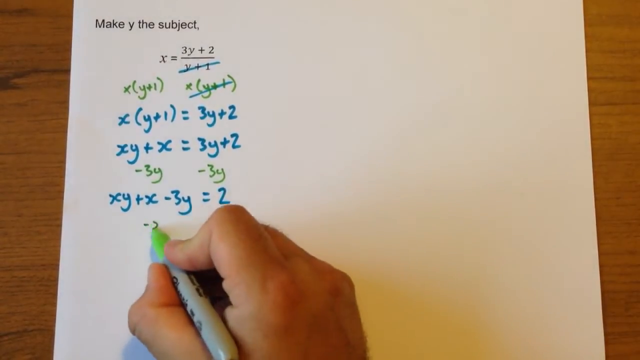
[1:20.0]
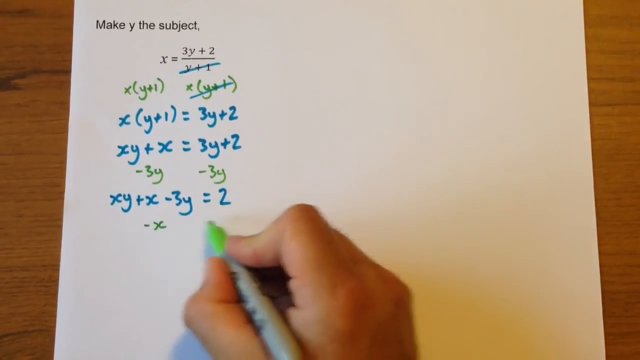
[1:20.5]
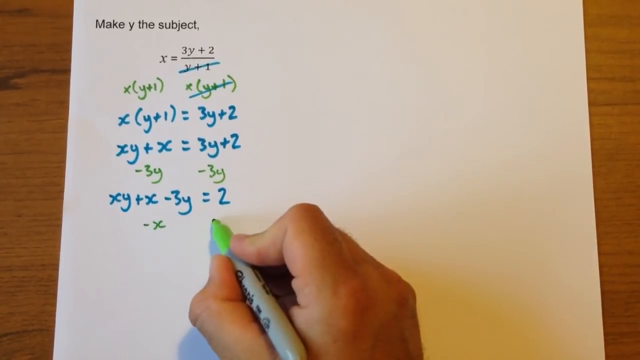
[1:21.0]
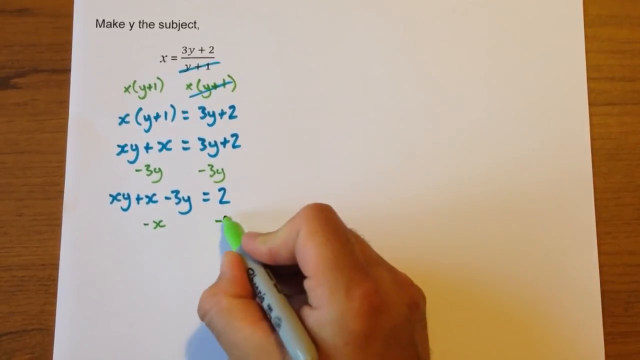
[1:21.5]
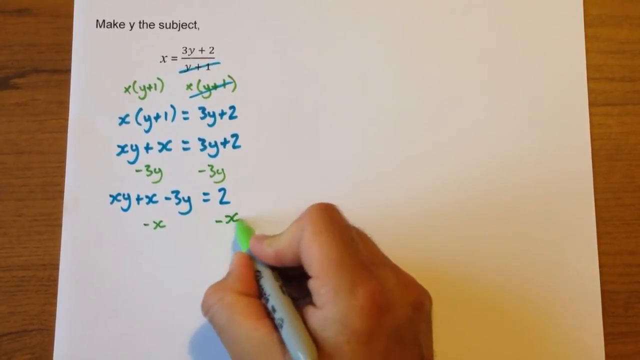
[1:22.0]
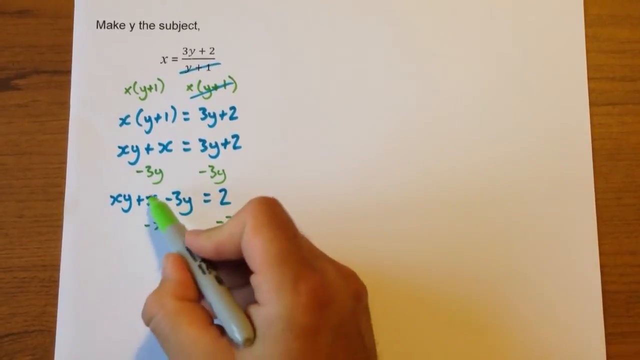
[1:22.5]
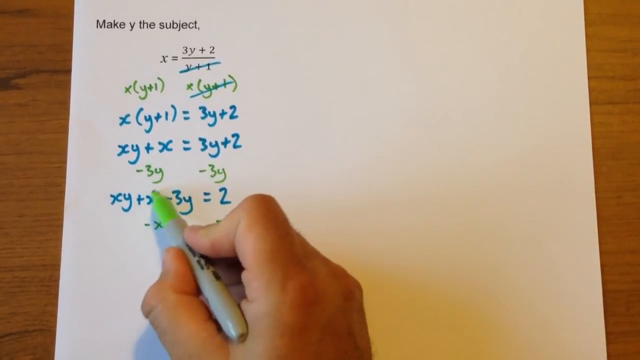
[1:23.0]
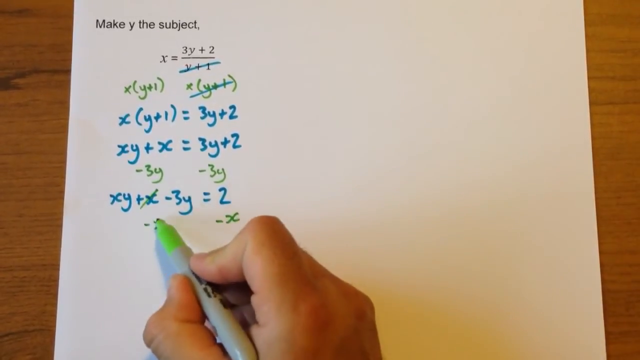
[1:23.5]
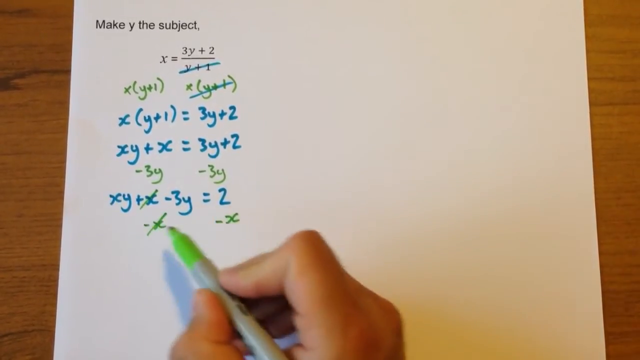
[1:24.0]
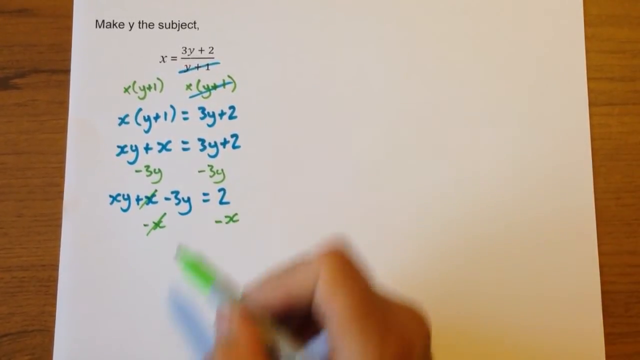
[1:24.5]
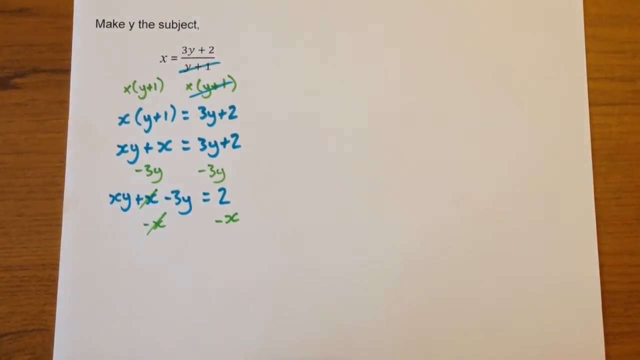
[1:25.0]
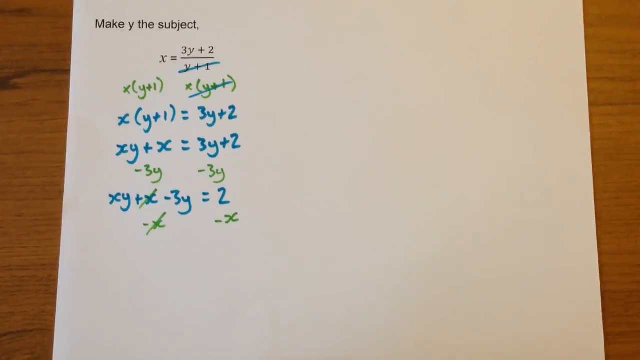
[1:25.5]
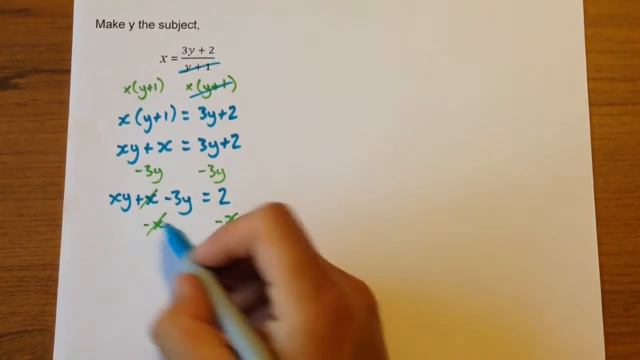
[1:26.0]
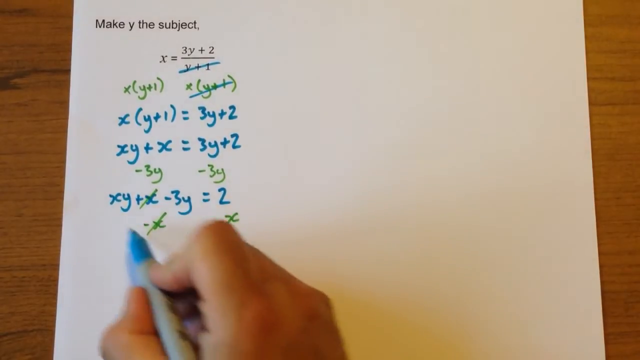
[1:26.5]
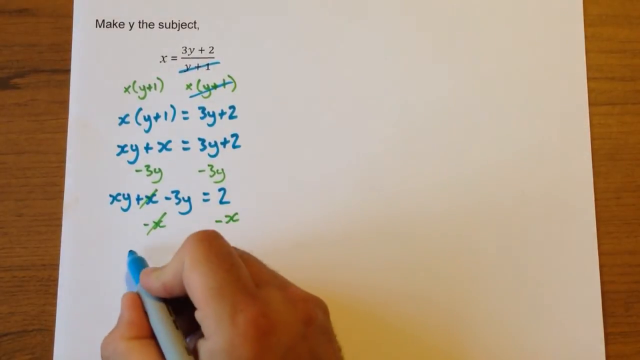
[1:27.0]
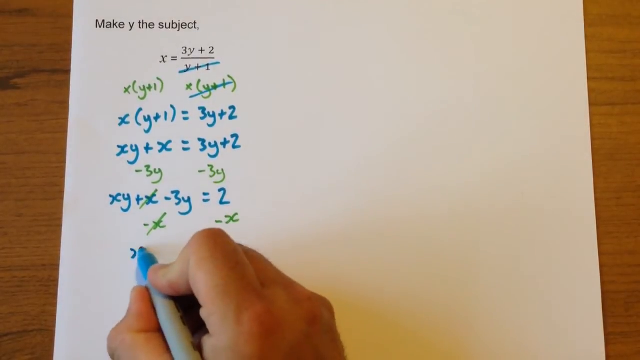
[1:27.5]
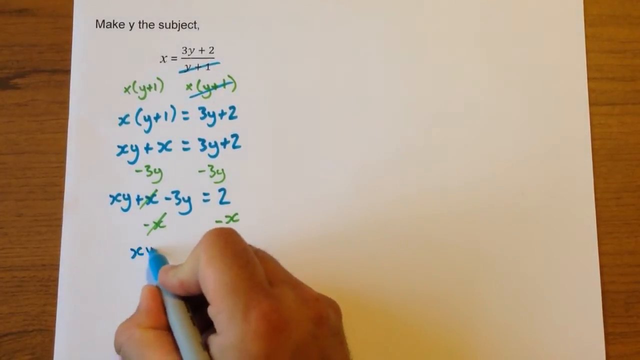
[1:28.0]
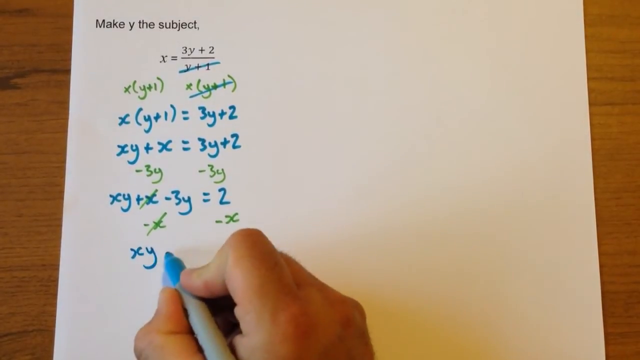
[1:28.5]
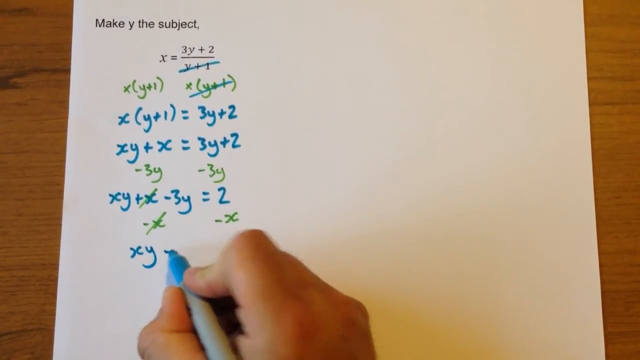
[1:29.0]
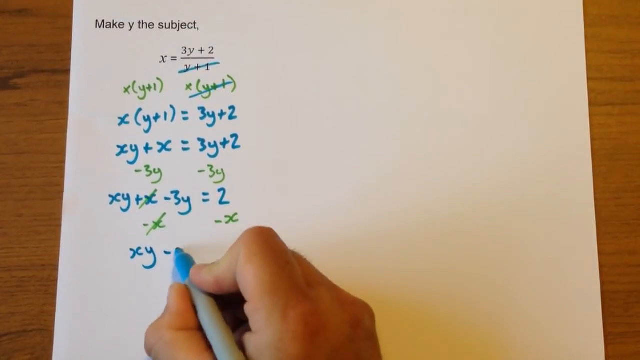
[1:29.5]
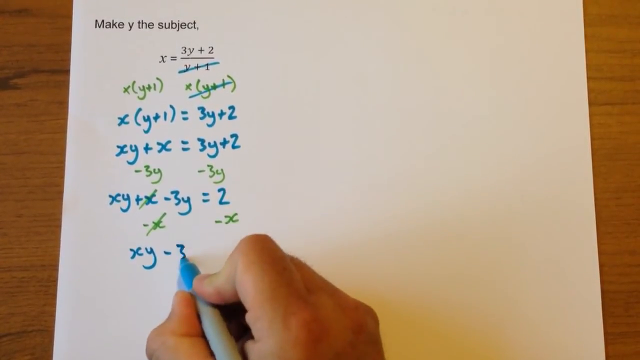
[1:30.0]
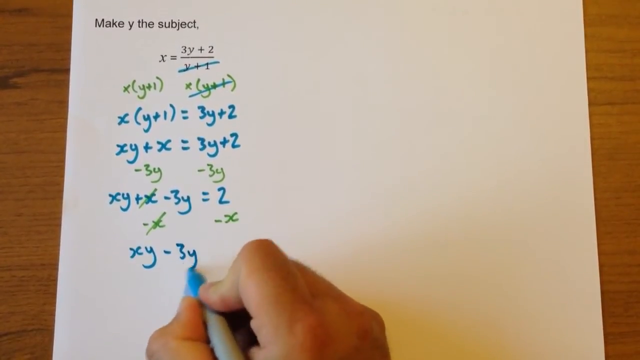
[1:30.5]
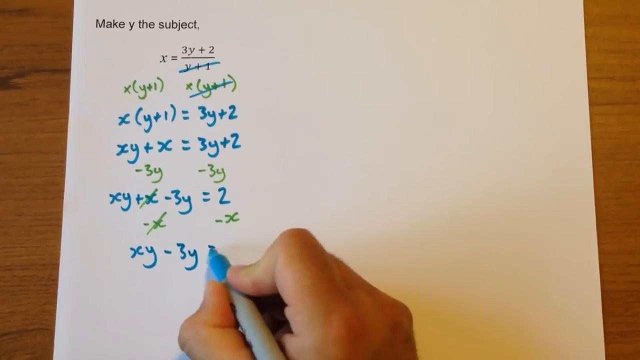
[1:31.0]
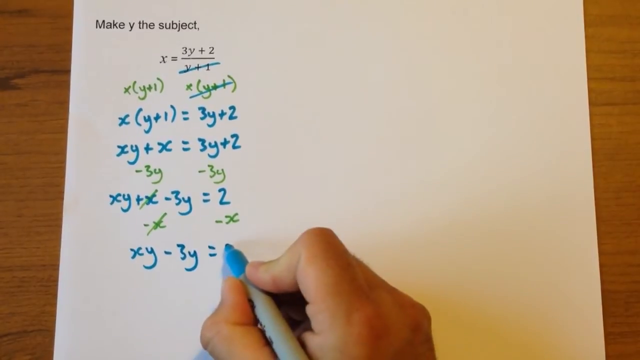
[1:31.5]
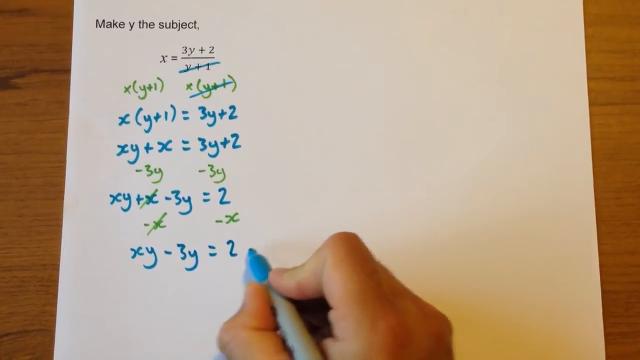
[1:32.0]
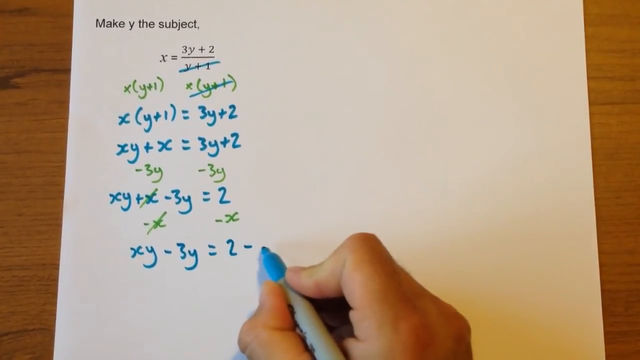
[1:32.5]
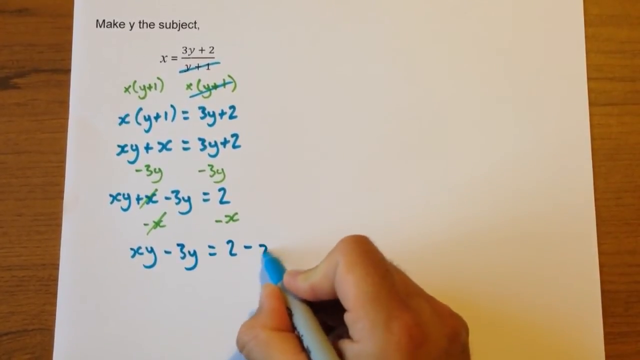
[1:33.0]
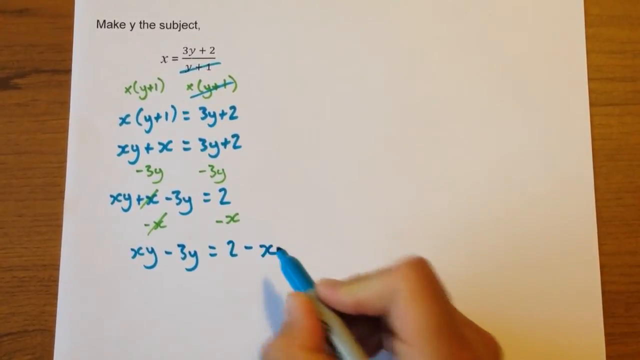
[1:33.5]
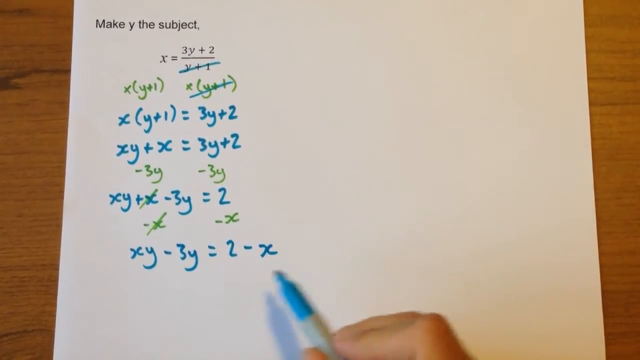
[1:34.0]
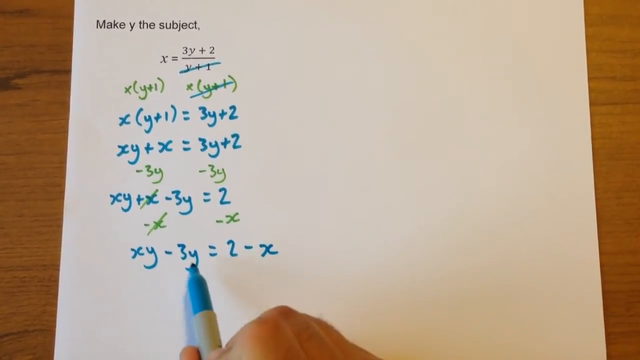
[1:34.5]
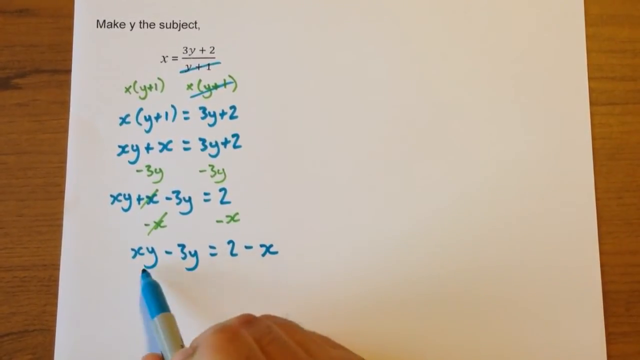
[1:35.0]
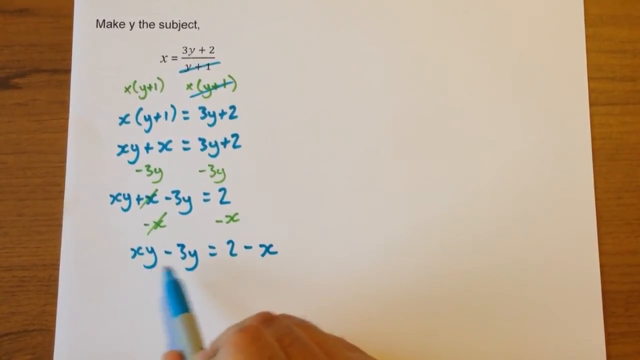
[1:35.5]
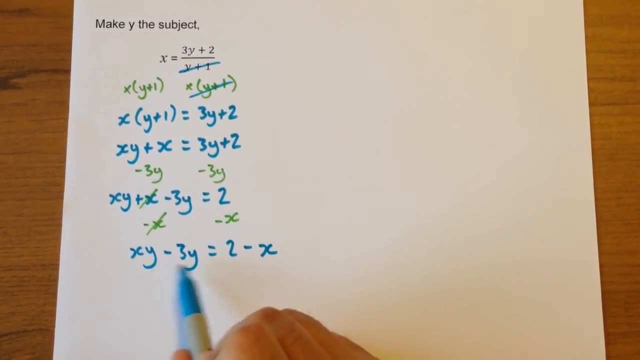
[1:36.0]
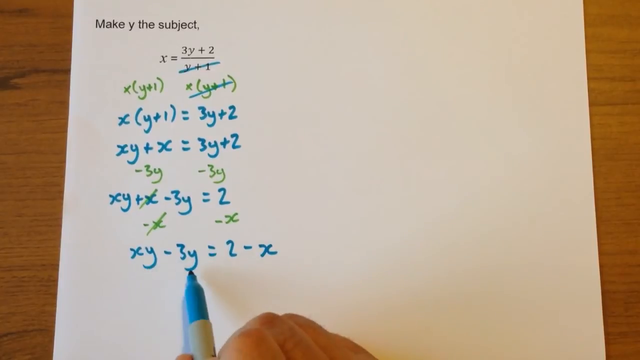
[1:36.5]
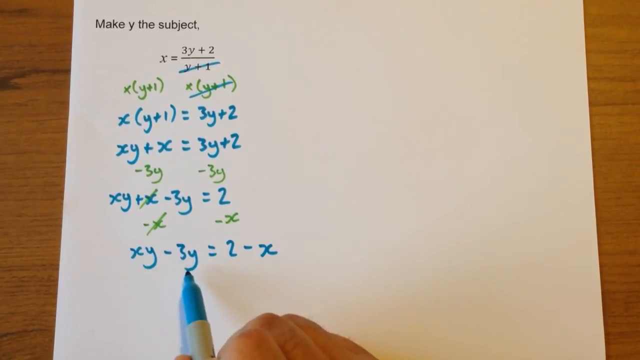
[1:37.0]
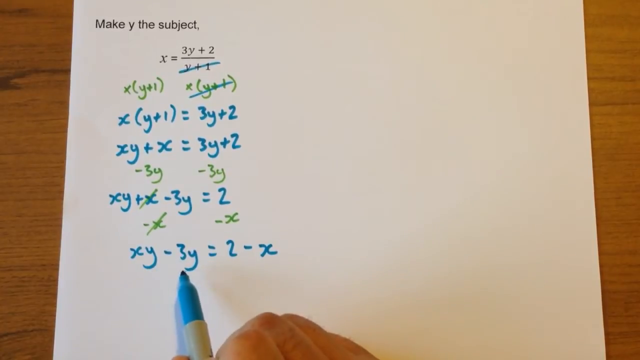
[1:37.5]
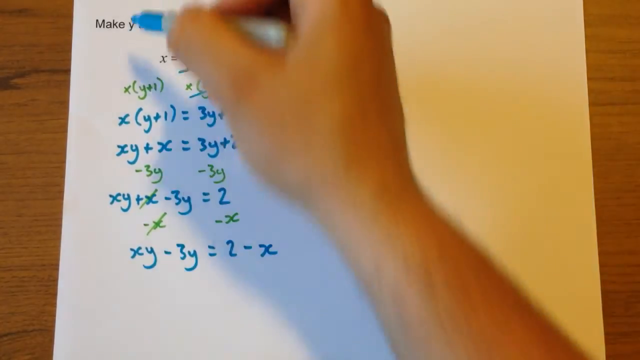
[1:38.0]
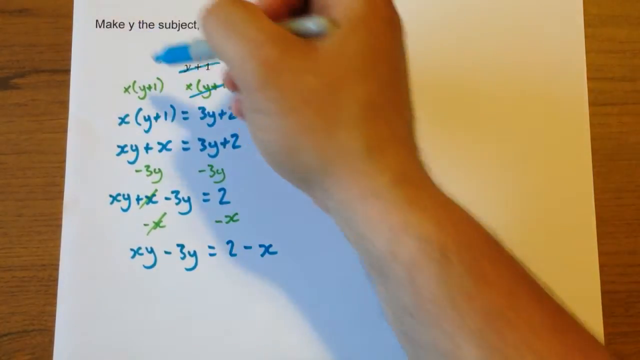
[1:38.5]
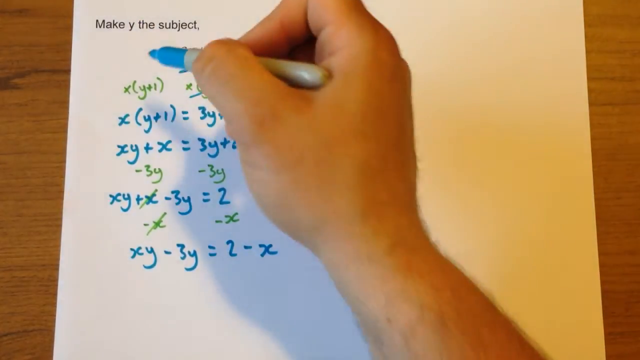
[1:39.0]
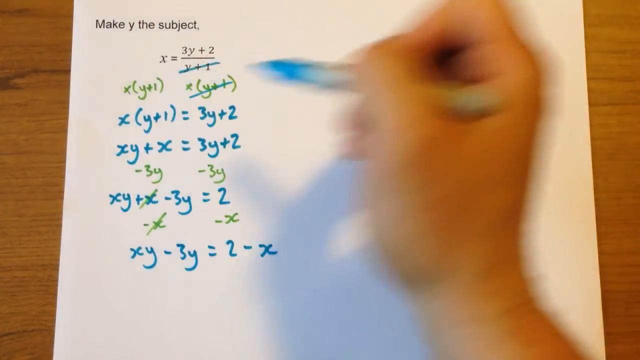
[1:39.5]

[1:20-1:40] The equation is being solved on a white piece of paper on a brown table. A Caucasian hand with a blue or green Sharpie fills in work underneath. At the top is "make y the subject," followed by the equation x = (3y + 2)/(y + 1). The person is solving it in blue and green. Underneath, in blue, is x(y + 1) = 3y + 2, then below that in blue, xy + x = 3y + 2. Underneath that, in green, is −3y, then −3y again, and below that is xy + x − 3y = 2.